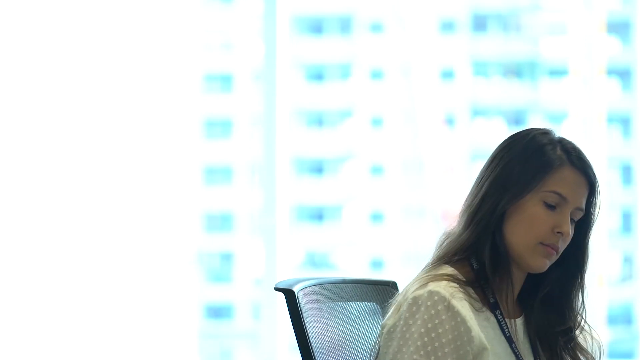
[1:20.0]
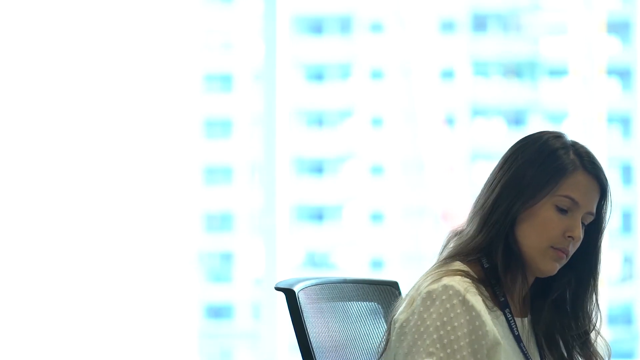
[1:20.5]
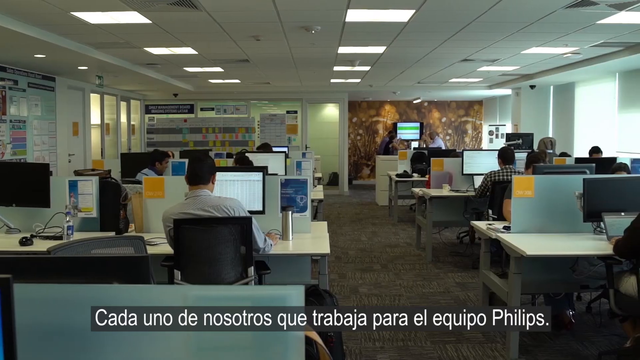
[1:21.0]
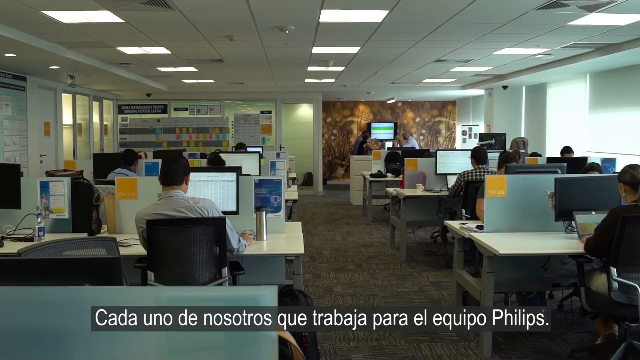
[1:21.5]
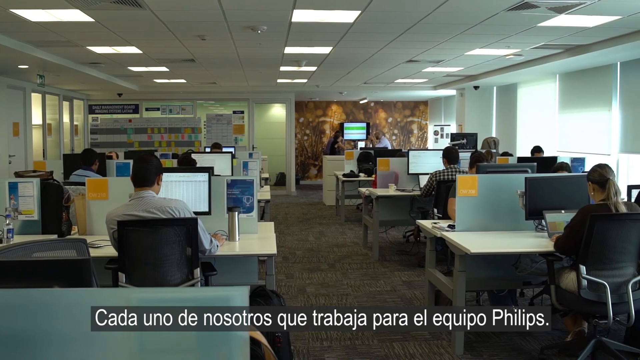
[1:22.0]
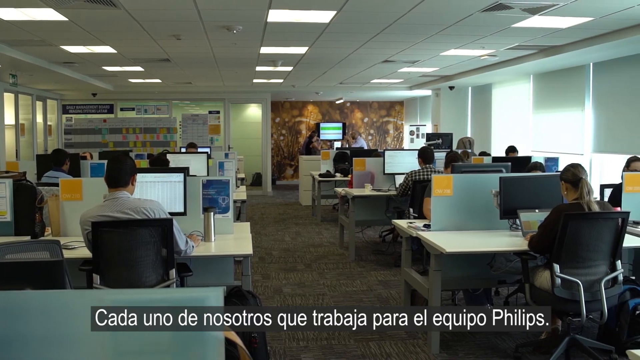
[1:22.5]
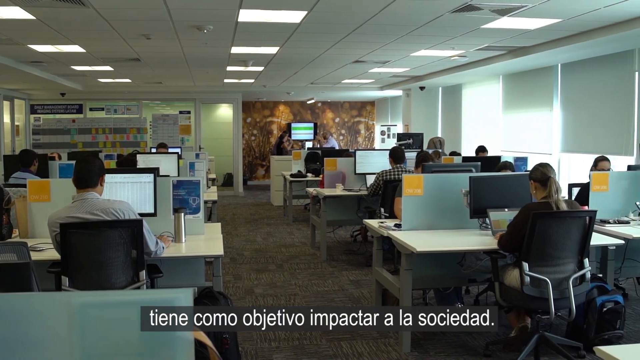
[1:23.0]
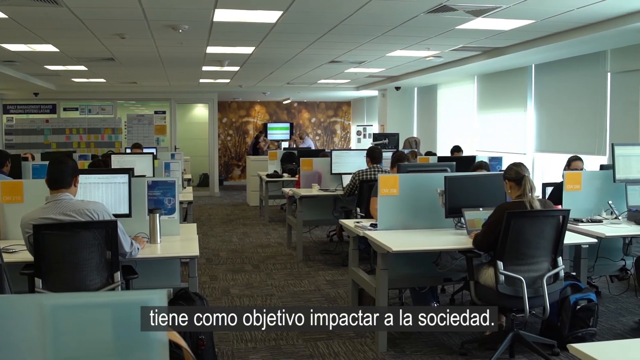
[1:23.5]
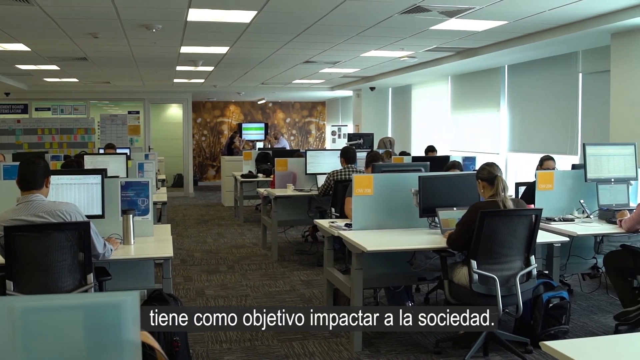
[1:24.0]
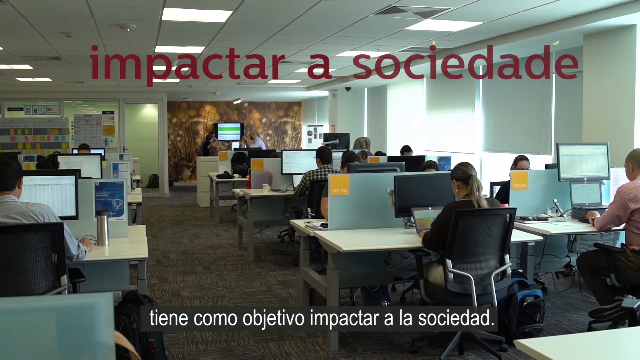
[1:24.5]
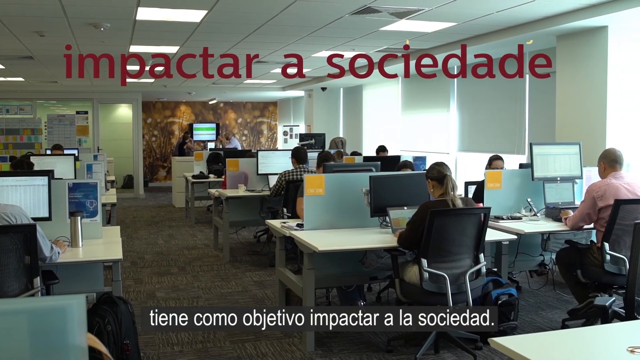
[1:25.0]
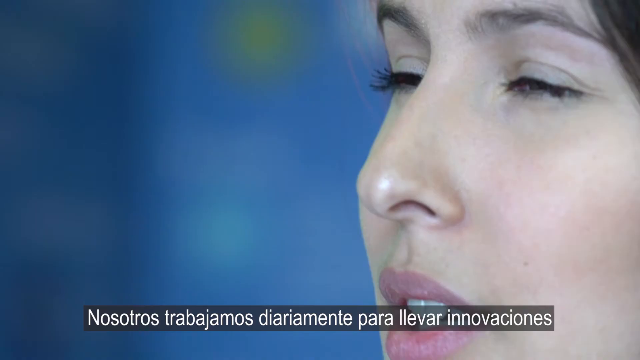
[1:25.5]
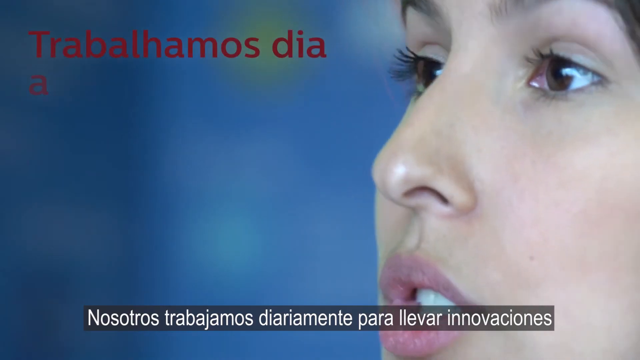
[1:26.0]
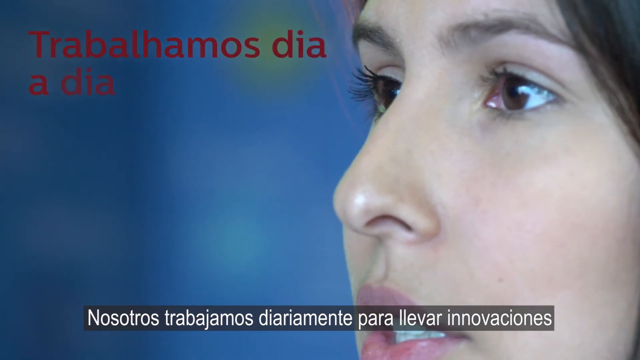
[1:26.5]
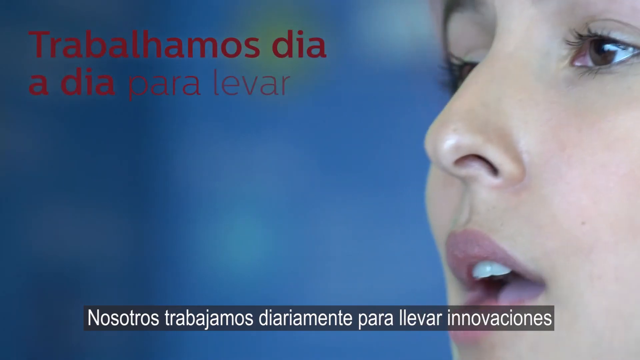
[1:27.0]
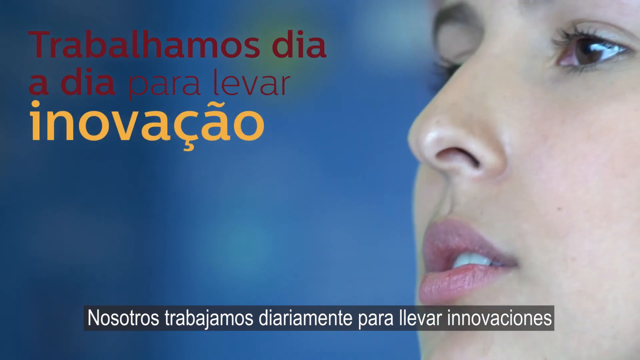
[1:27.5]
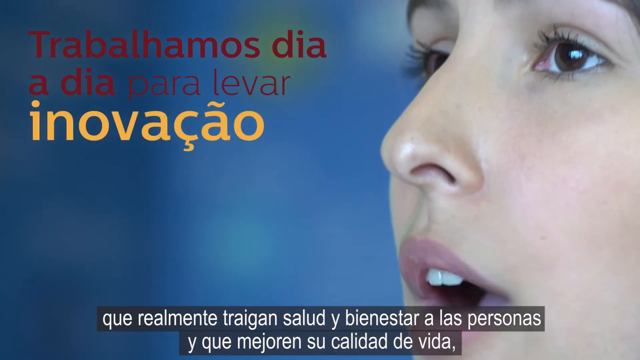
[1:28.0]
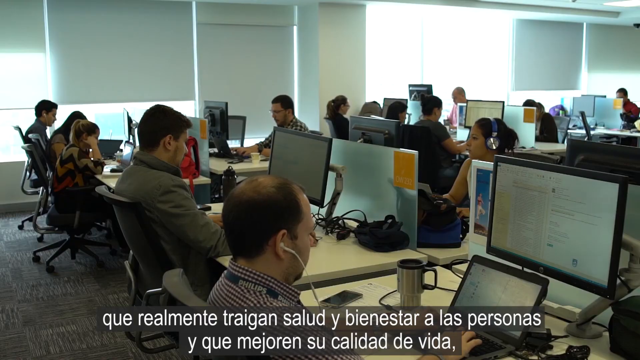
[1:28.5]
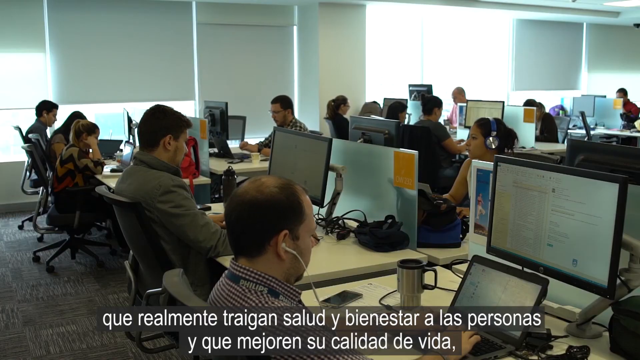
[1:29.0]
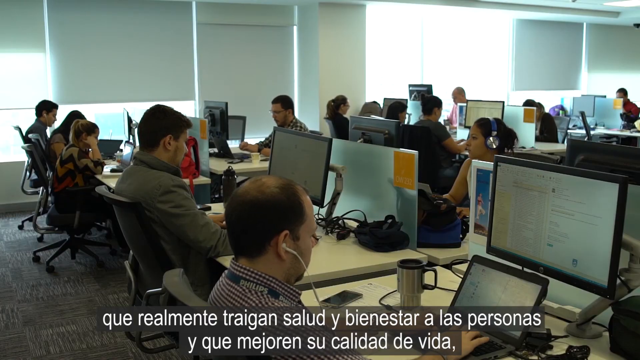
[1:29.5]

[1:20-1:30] A low-angle shot shows Anna sitting in a chair, working. The scene changes to an office space where a man in a collared button-up shirt works at a computer desk, his hand on the mouse, looking at a computer monitor. On the left side of the screen are the backs of the heads of various other workers, and on the right side many workers sit in office chairs at their desks looking at their computer monitors. Bright white lighting is on the ceiling, and natural light pours in through windows on the right side of the screen. The camera pans to the right, revealing more office workers, both male and female, and the words "impactar a sociedade" appear at the top center of the screen. The shot changes to another close-up of Anna's face, with the words "Trabalhamos dia a dia para levar inovacao" in the upper left corner of the screen. Then a low-angle shot shows many male and female office workers busily working at their computer desks, including a man balding on top with earbuds in his ears and a steel coffee mug on his desk.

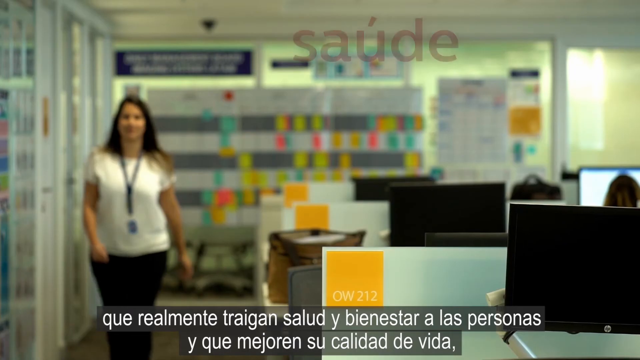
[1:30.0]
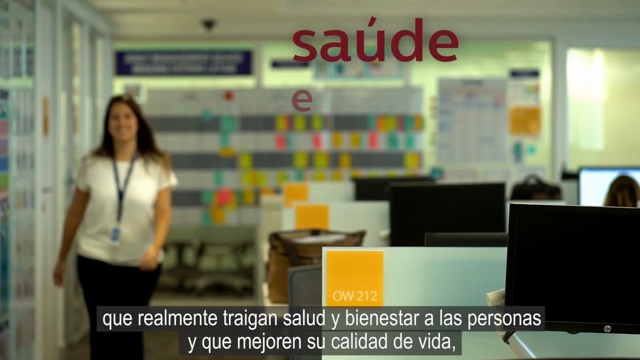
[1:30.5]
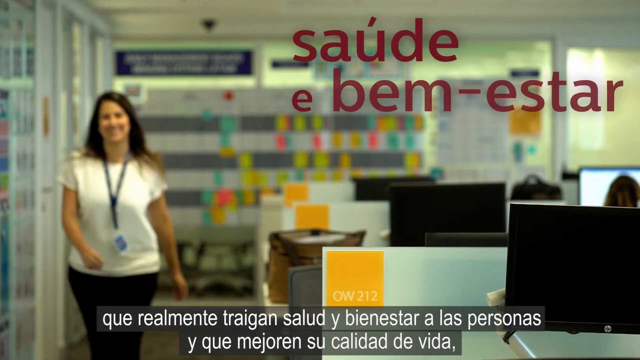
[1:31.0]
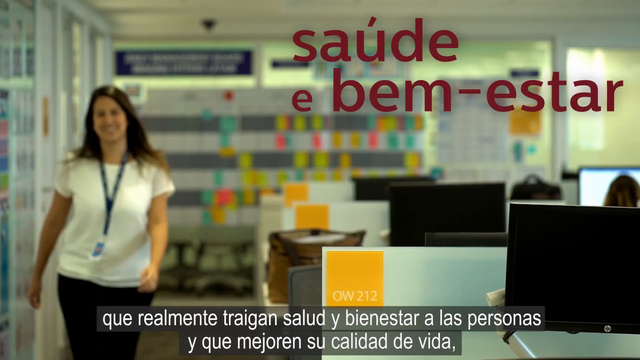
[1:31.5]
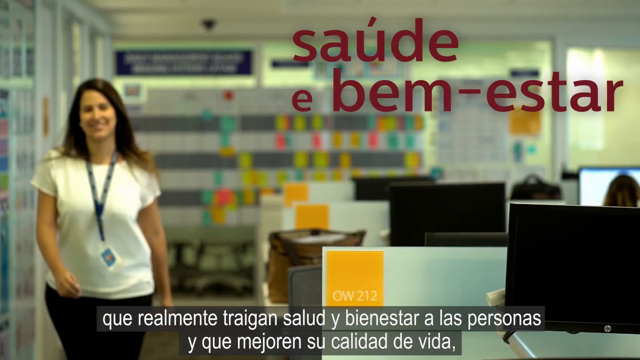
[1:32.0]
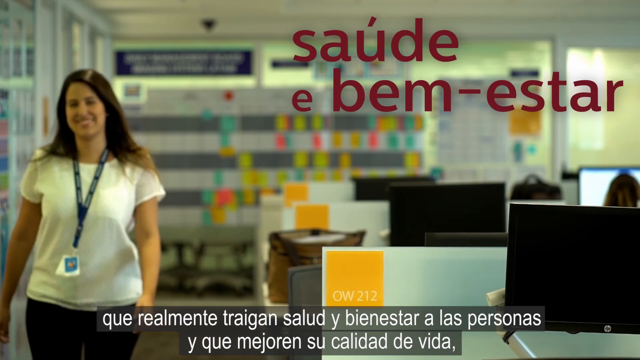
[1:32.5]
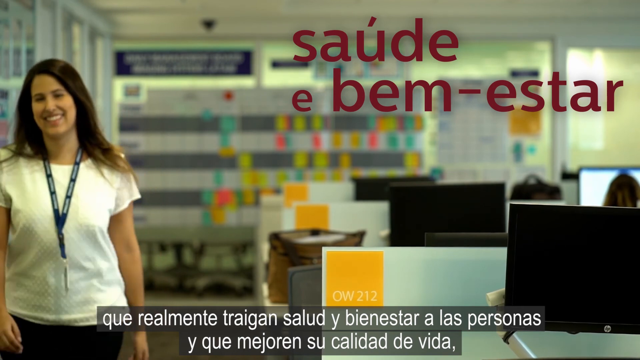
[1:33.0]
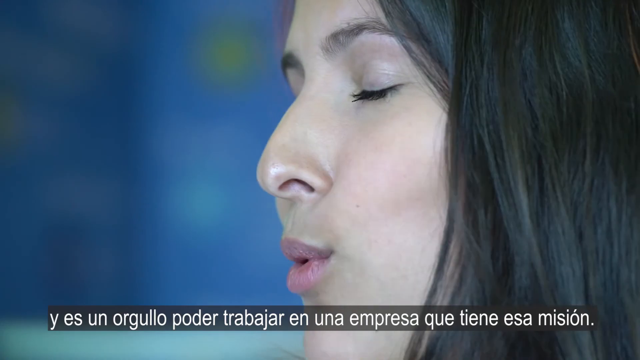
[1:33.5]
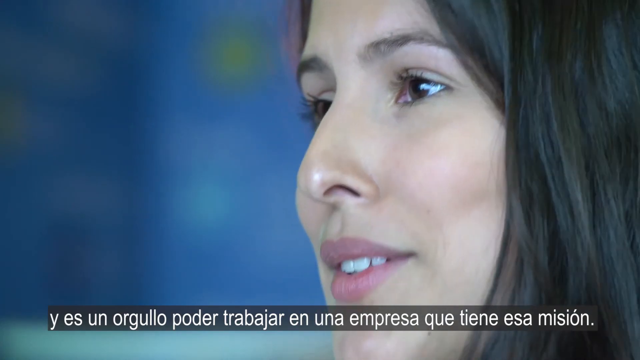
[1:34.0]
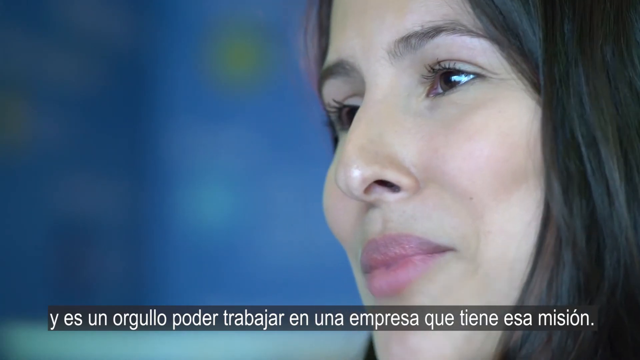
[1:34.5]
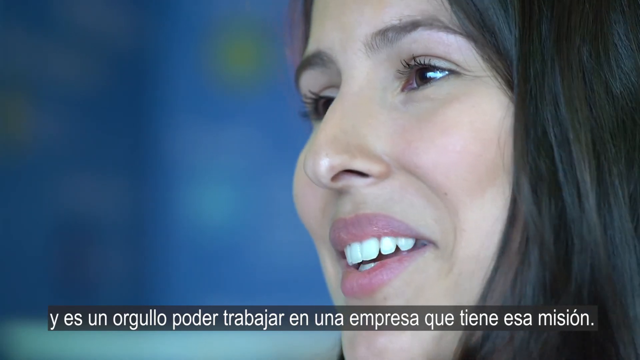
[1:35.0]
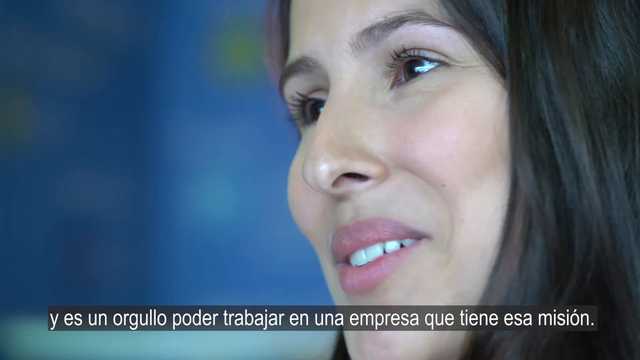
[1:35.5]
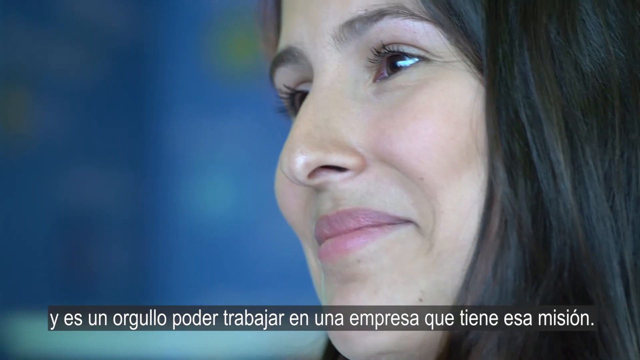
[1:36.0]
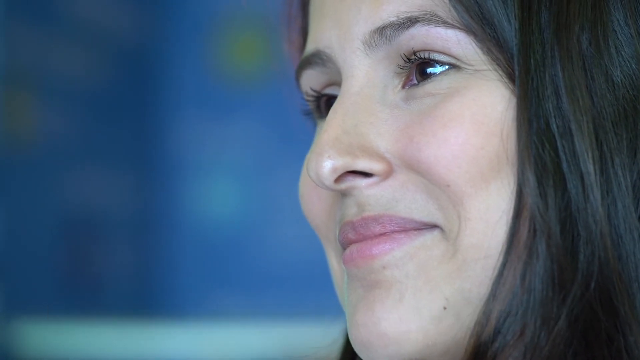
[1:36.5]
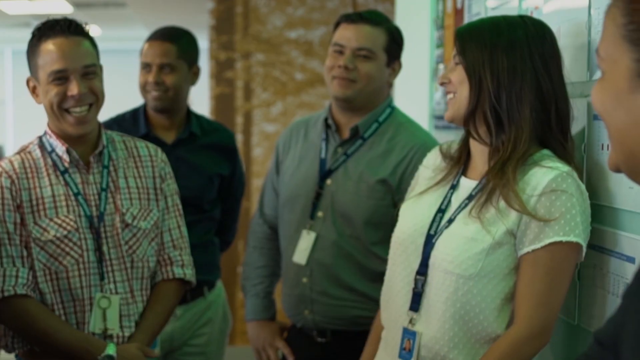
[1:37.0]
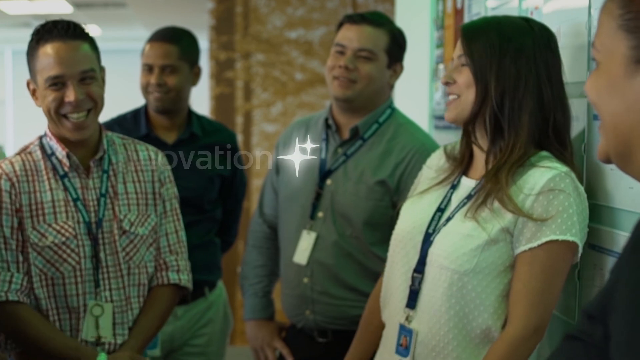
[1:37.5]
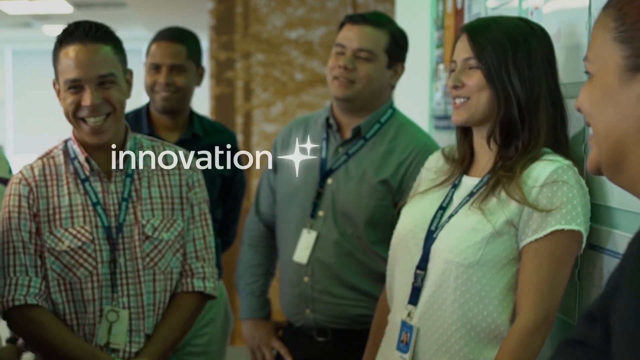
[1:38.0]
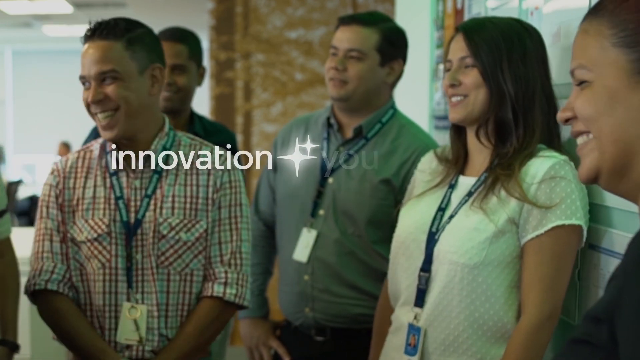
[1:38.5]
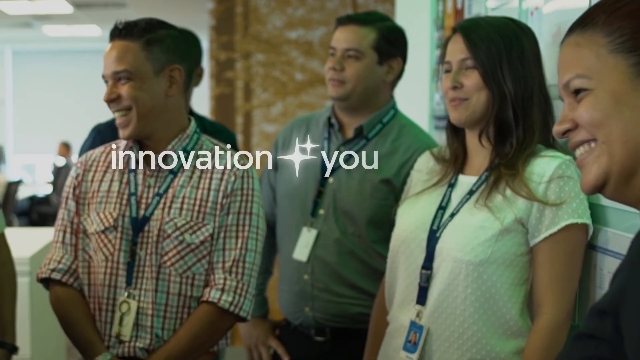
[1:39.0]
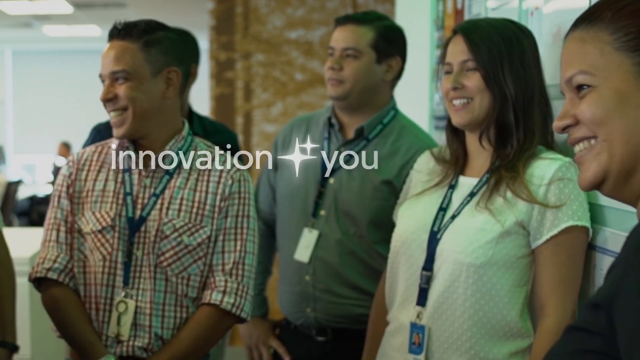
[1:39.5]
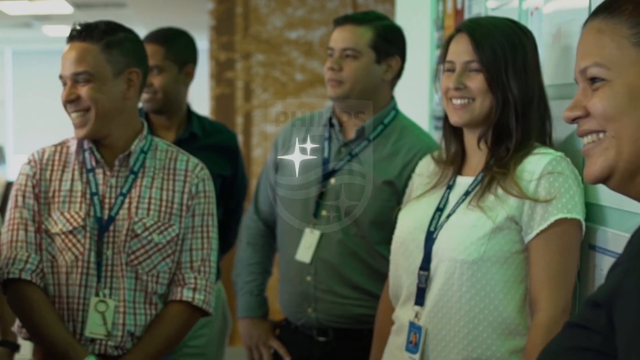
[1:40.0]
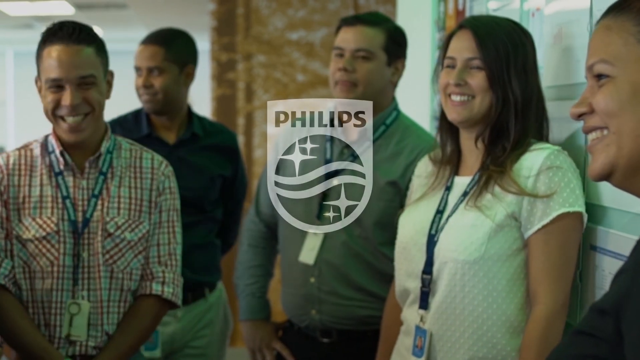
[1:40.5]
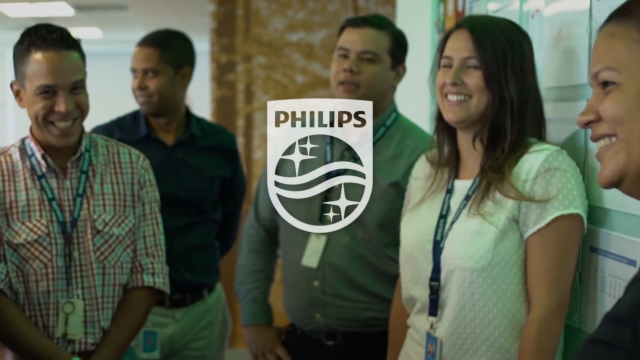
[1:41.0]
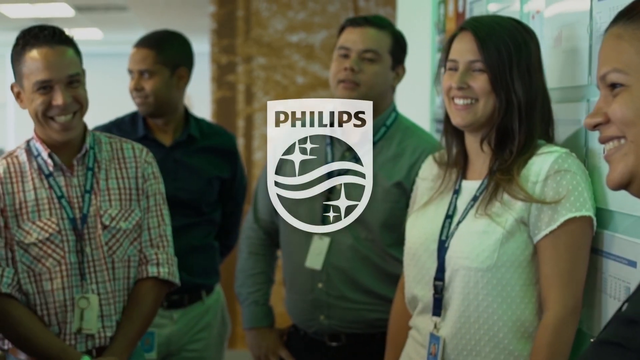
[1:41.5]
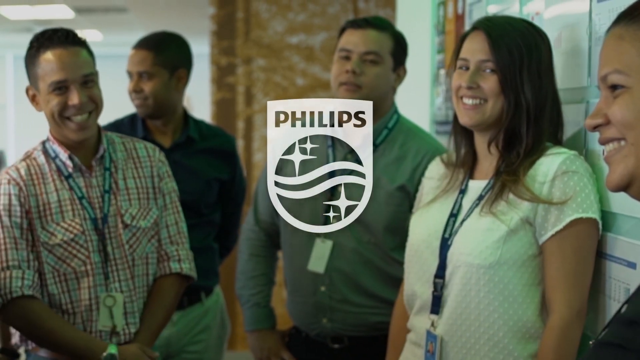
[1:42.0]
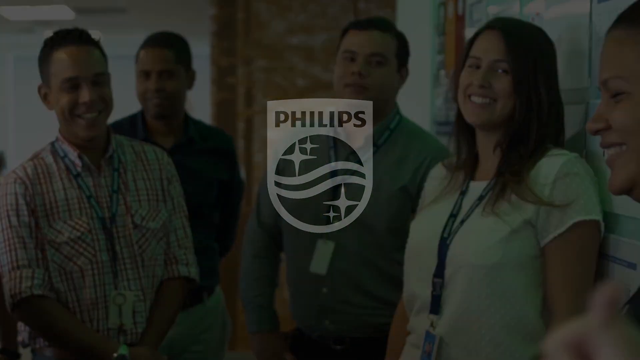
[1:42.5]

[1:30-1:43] Anna walks toward the camera in an office room area with glass windows and doors covered in sticky notes of multiple colors. She is smiling, and the words "saude e bem-estar" appear in the upper right corner. The shot changes to a close-up of Anna's face as she speaks and smiles, showing her white teeth; her cheeks rise, and she brings her head forward and then back again. The scene then shows Anna leaning against a wall with co-workers, all wearing blue Philips bands around their necks with badges attached. The workers seem to be smiling, laughing, and enjoying themselves. The words "innovation, you, Philips, bright shining stars" appear in the middle of the screen, and Anna looks at the camera and smiles.